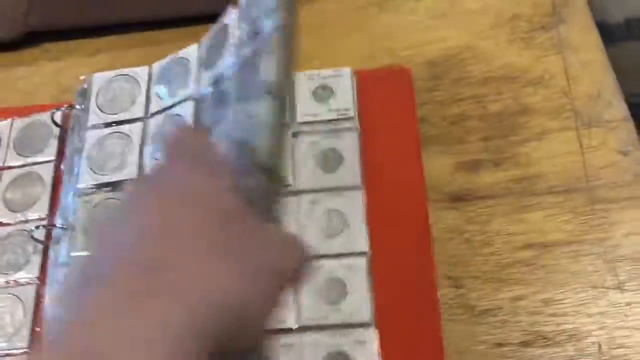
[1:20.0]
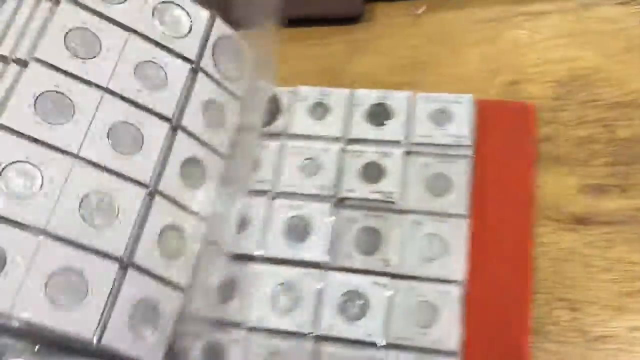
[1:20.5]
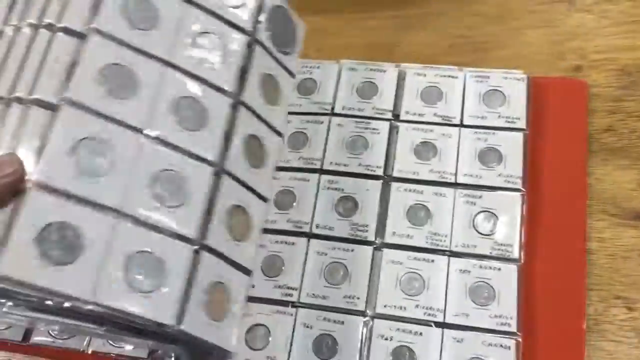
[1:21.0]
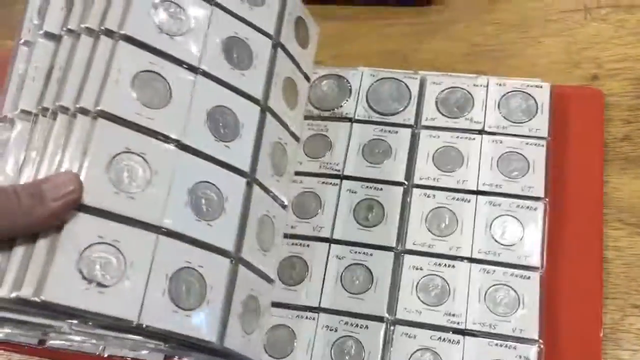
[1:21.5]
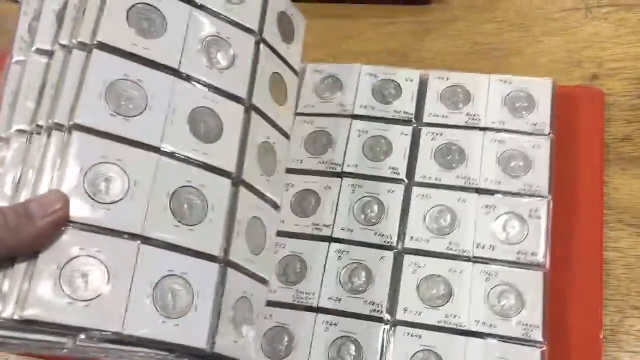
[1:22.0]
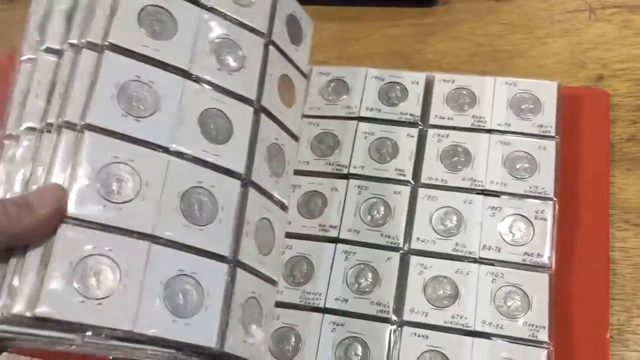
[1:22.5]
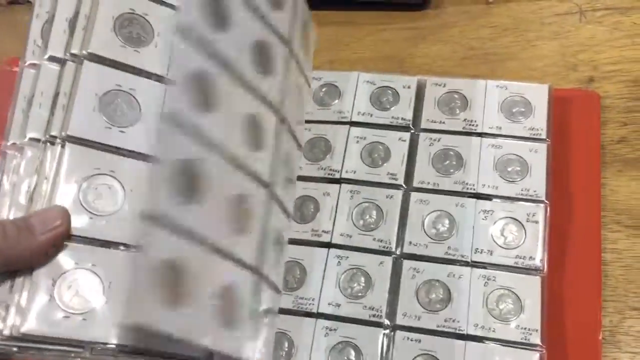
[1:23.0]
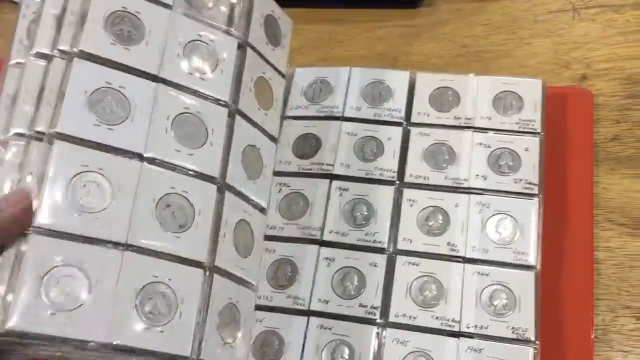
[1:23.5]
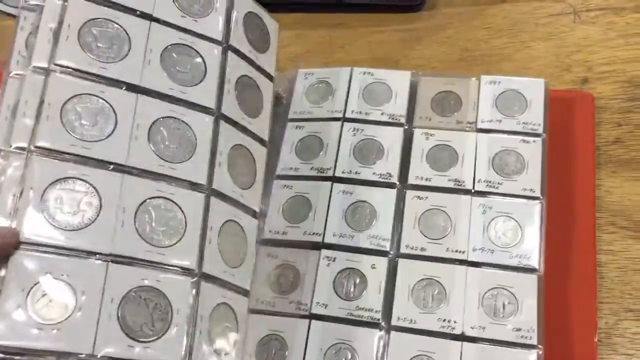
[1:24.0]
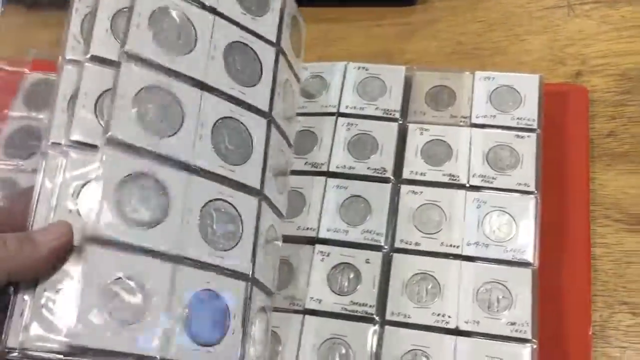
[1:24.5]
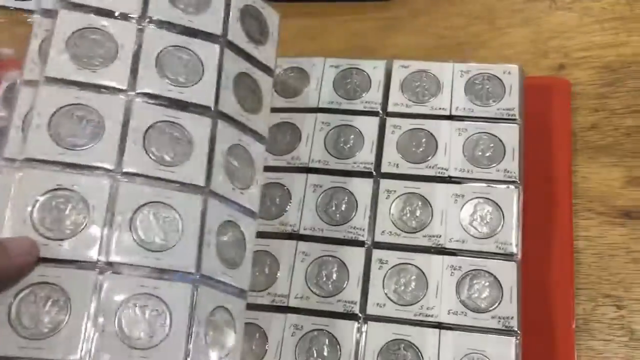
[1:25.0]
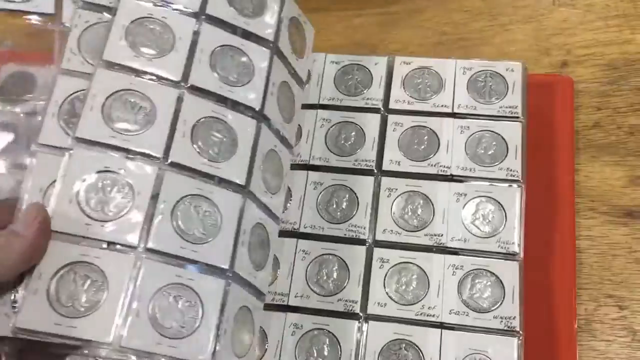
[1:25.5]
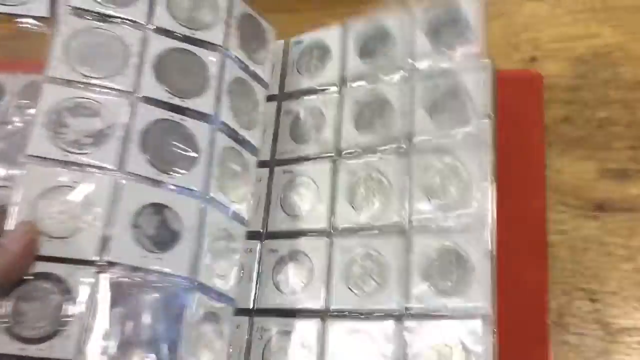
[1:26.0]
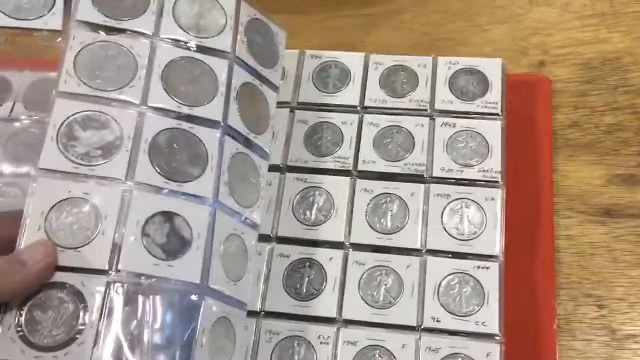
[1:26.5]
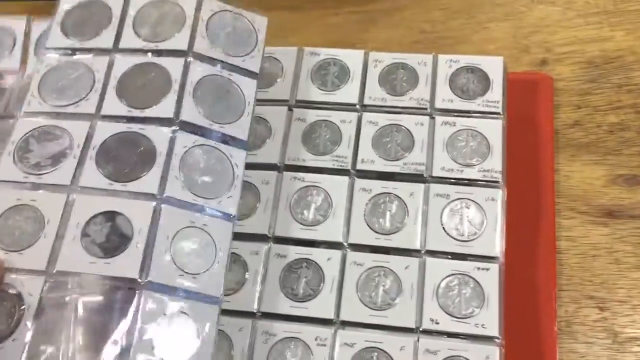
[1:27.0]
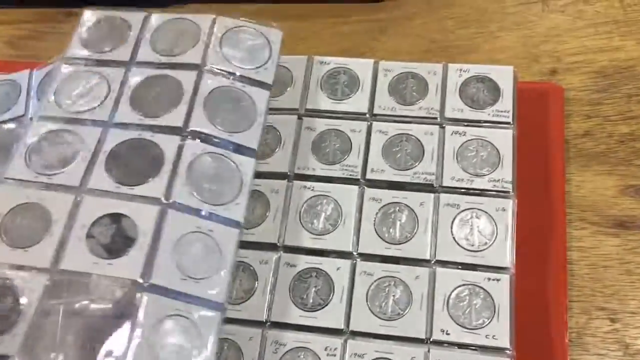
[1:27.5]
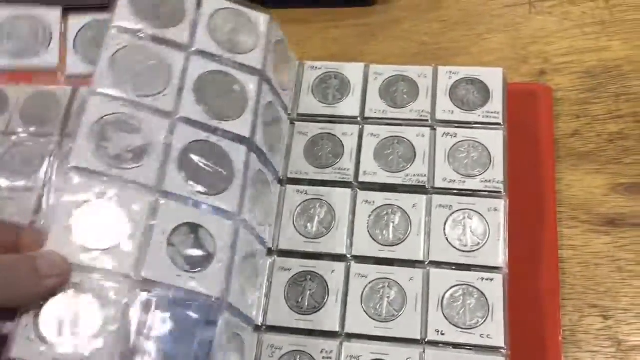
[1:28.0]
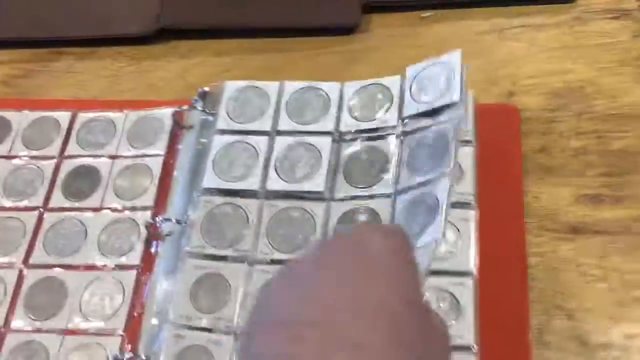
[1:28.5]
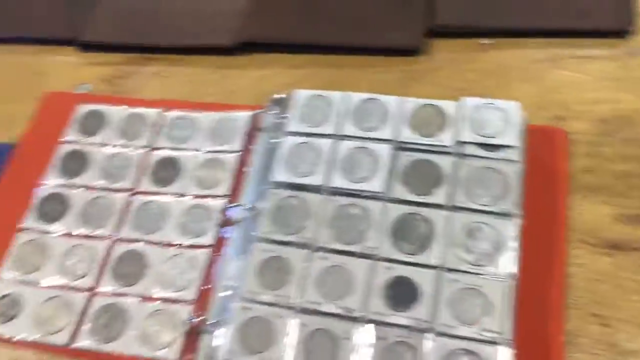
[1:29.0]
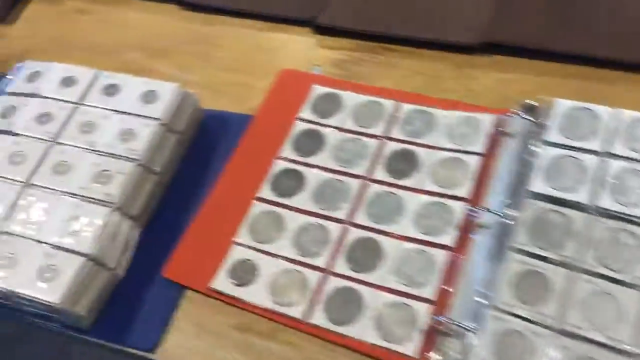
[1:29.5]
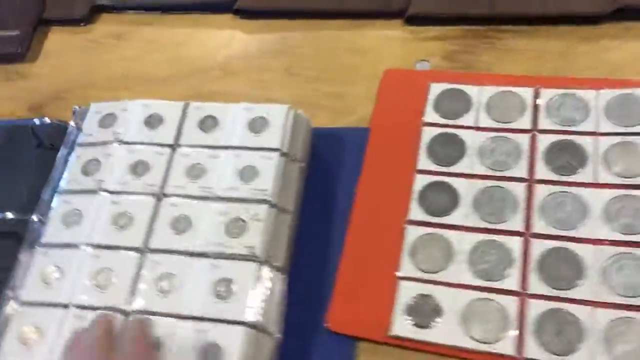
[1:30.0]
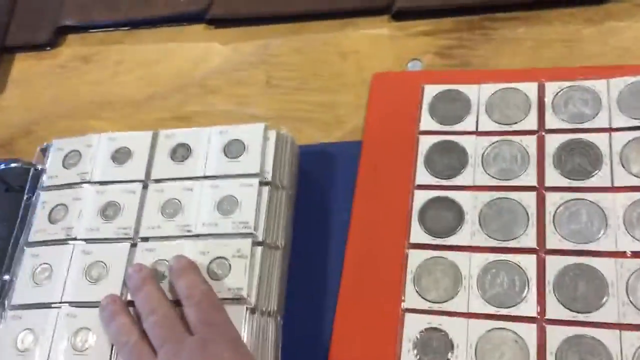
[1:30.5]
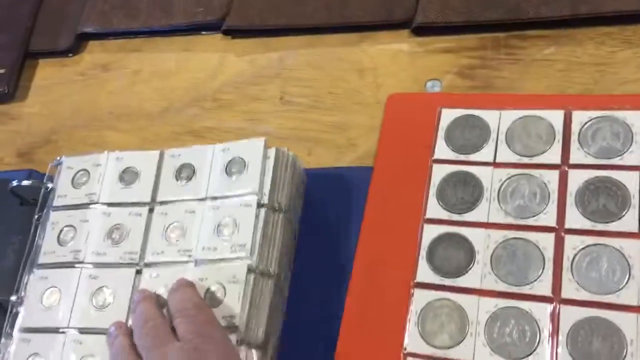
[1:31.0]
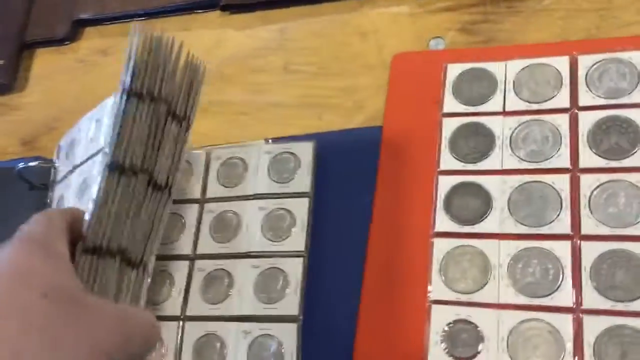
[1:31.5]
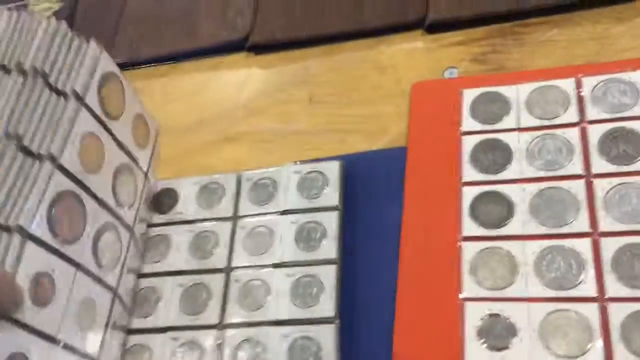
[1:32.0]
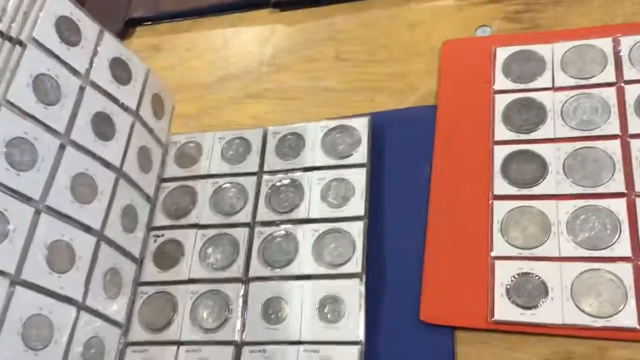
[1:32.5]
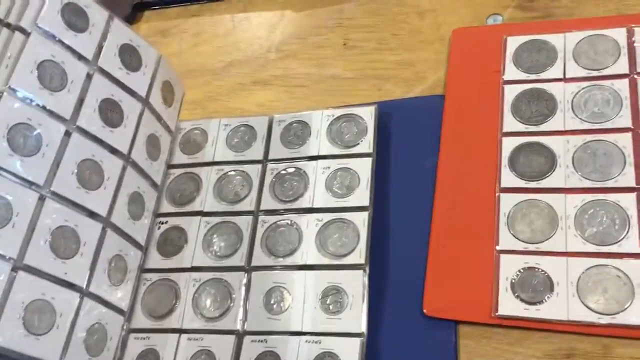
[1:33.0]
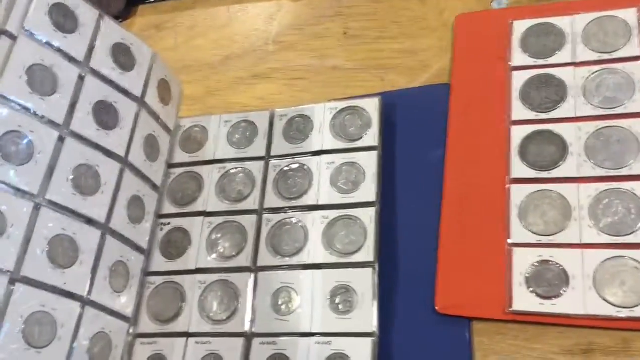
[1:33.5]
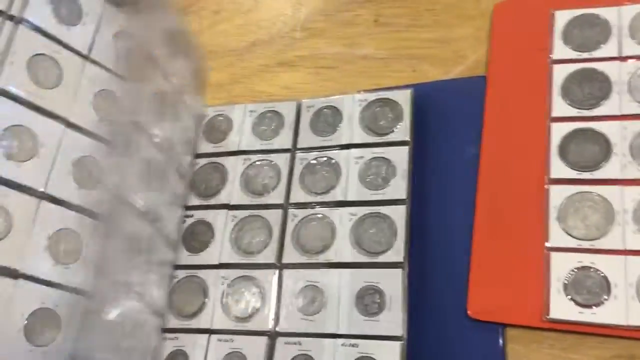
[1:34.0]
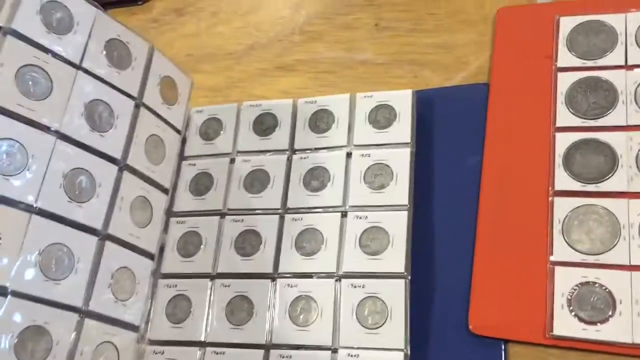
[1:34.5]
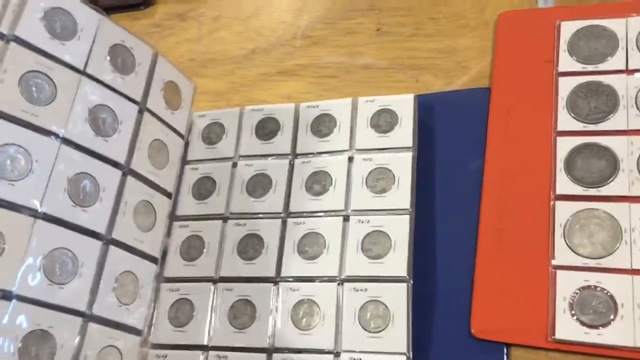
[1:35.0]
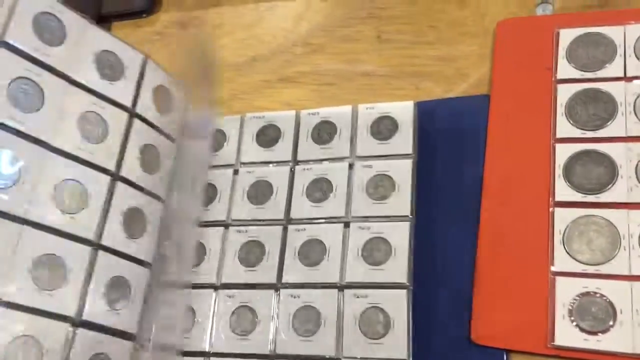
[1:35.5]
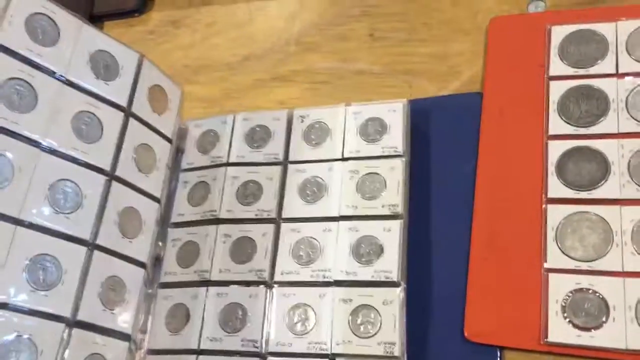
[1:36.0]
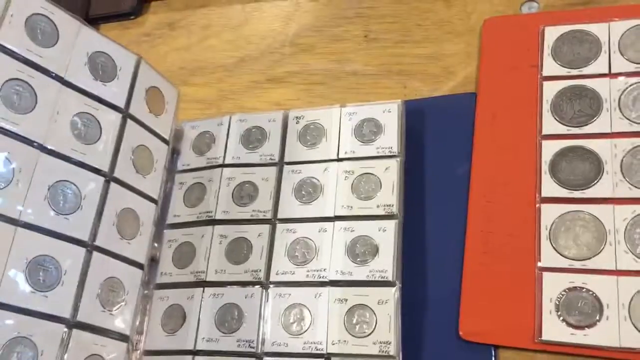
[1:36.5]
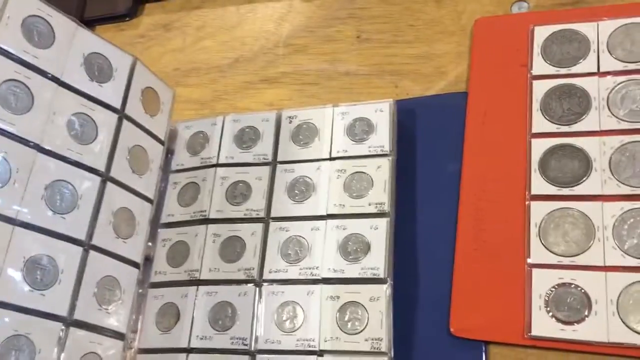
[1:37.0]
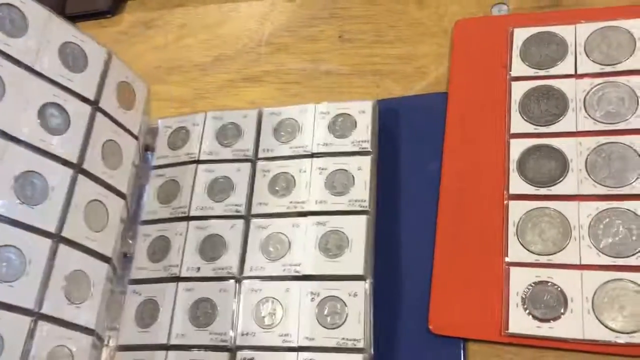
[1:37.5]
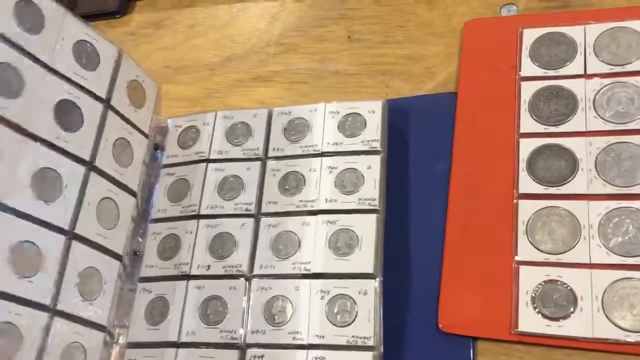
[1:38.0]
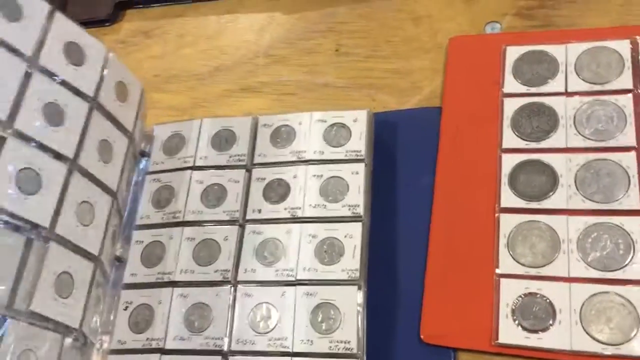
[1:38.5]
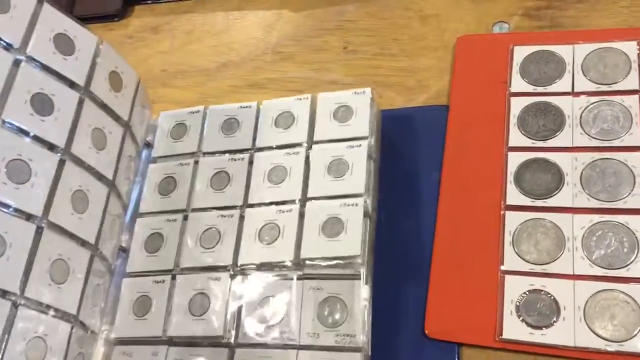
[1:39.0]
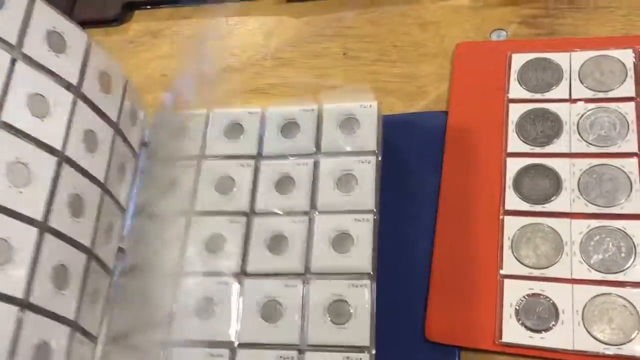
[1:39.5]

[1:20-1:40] A white person's hand keeps turning pages in a file holding many silver coins with different signs on them. Some pages seem to have been cut, as they are not full. There are blue files and maroon files holding different coins that show different numbers. The files are on top of a brown, varnished table that shines. The hand starts with the maroon file and then moves to the blue one. The numbers on the coins cannot be read, but the coins are silver, and the sign on each coin is different.